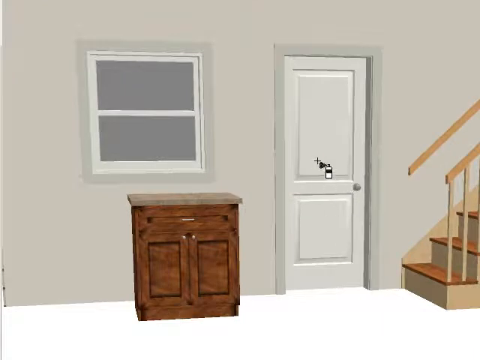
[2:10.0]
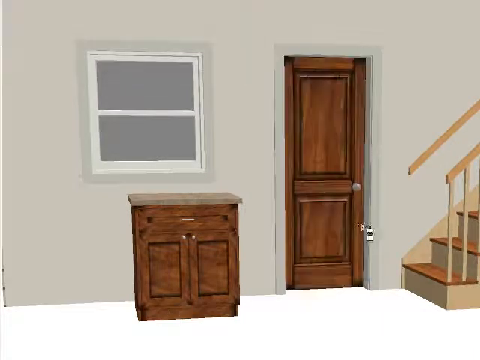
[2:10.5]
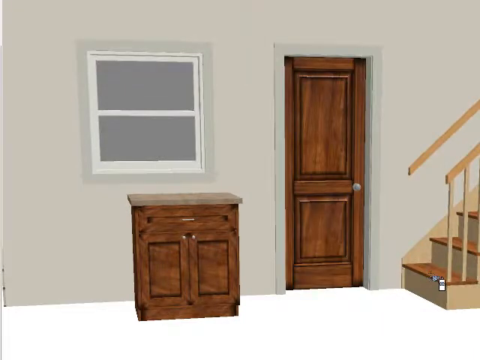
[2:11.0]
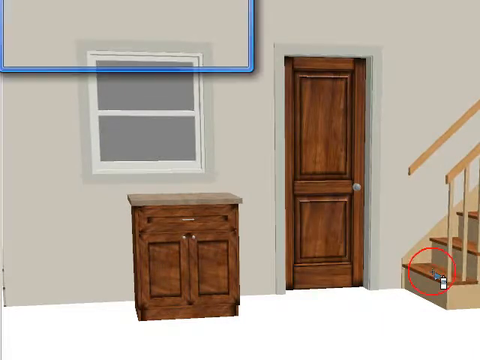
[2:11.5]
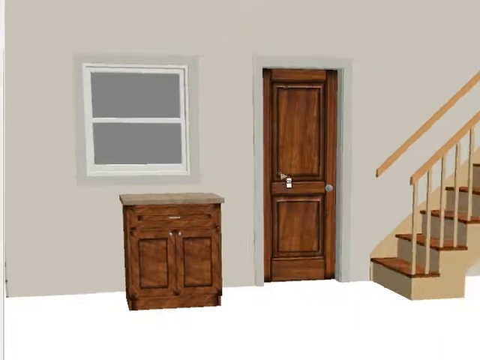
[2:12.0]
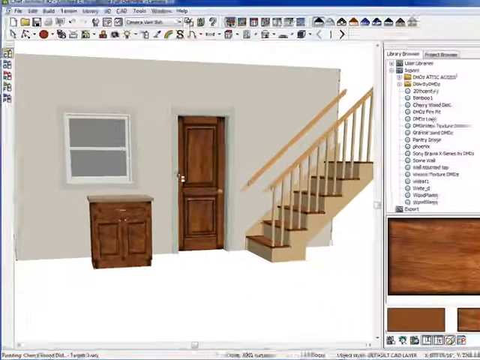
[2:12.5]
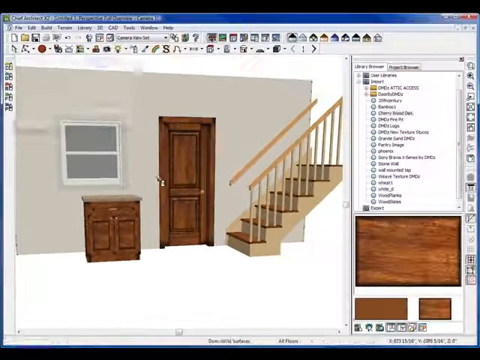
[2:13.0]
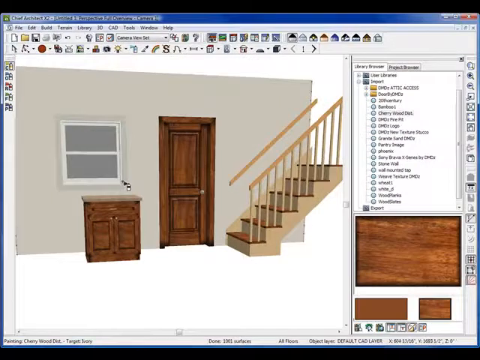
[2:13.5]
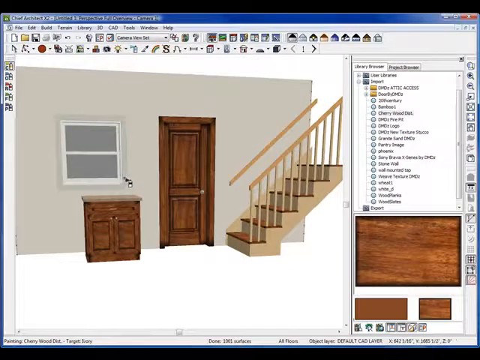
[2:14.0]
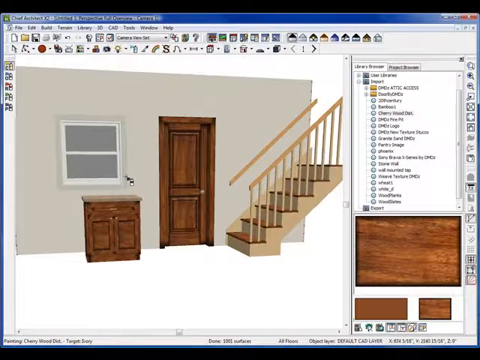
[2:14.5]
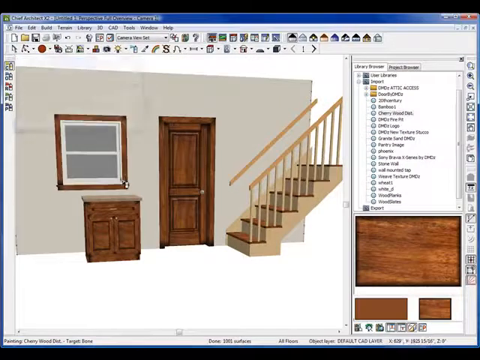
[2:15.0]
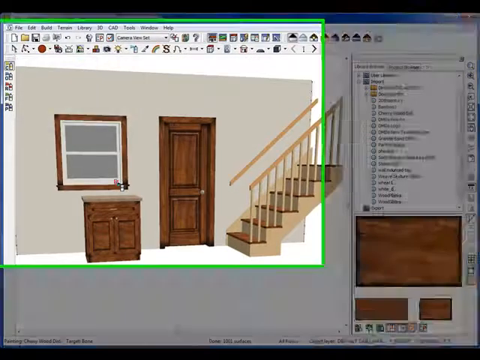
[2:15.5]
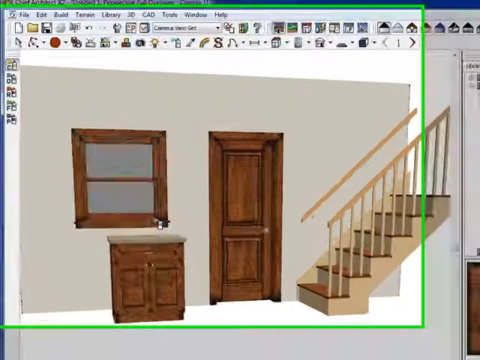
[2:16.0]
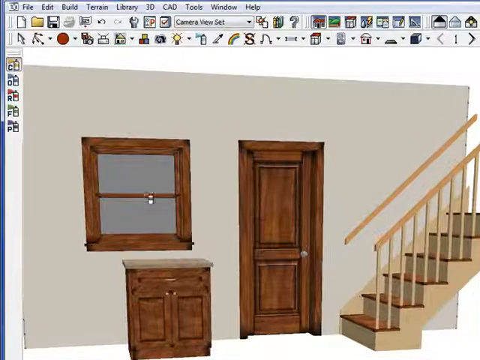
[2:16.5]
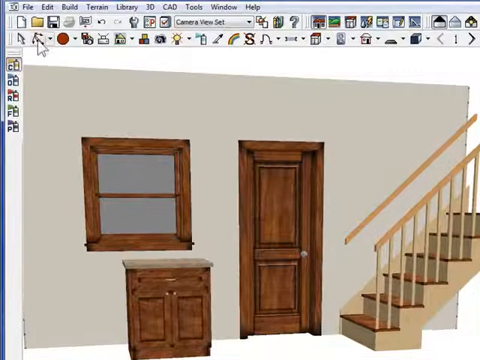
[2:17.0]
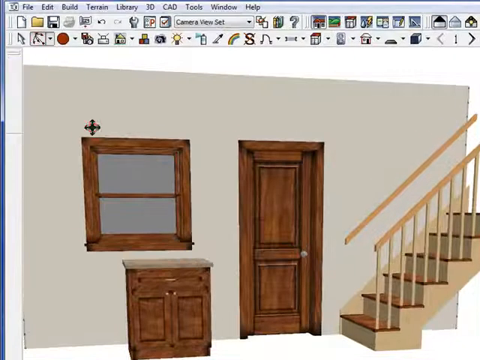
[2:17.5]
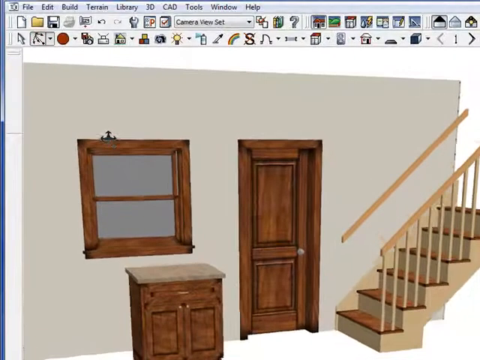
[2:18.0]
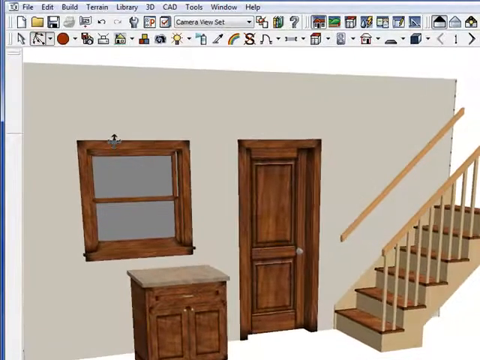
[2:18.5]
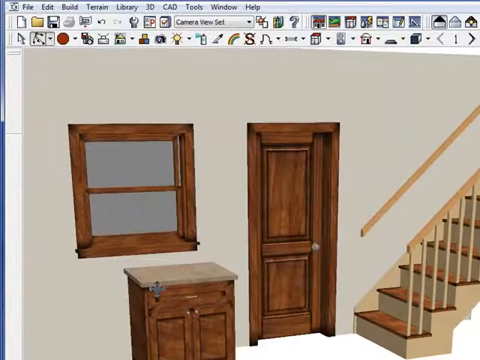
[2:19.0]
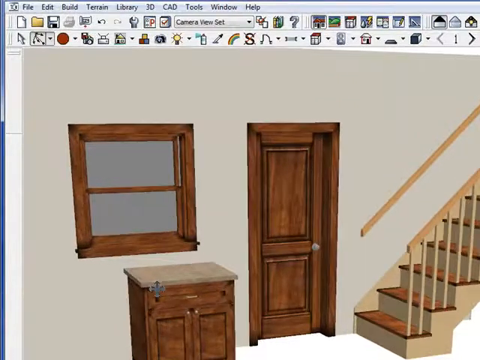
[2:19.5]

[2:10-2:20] The door is clicked and given the same look, as is the window frame. The tops of the stair steps are clicked and take on the wood look, and the wood frame of the window gets the wood look as well. What was previously a light tan nondescript color, and a lighter gray on the door, has become a warmer medium honey wood finish with visible grain.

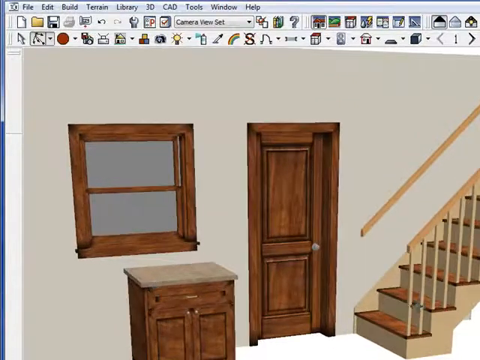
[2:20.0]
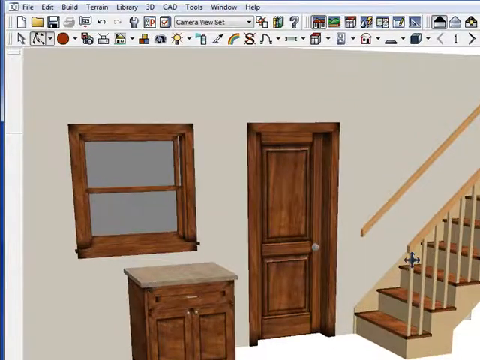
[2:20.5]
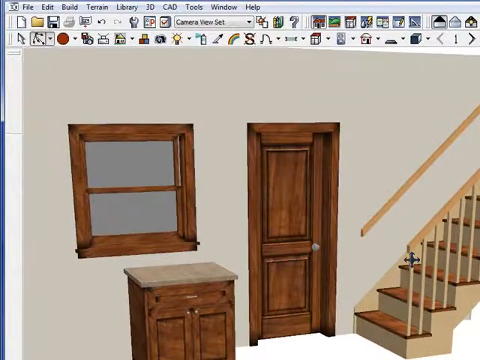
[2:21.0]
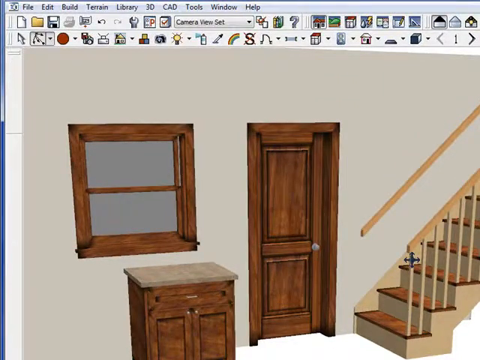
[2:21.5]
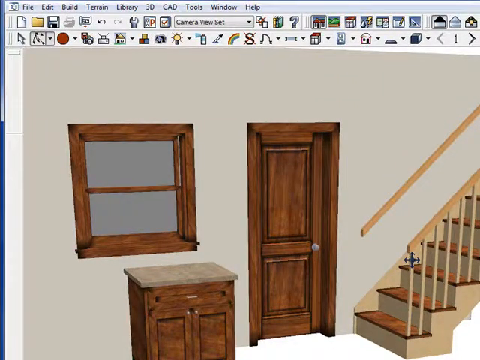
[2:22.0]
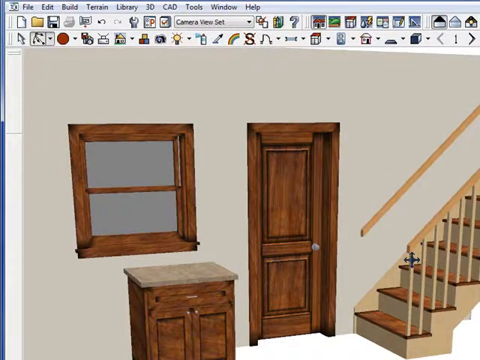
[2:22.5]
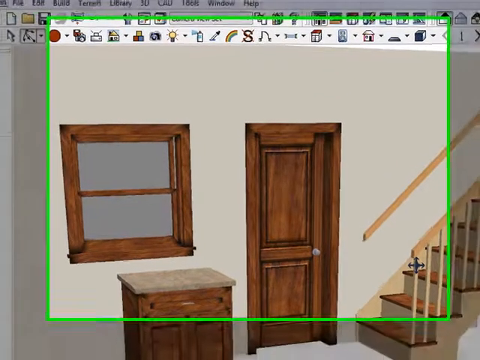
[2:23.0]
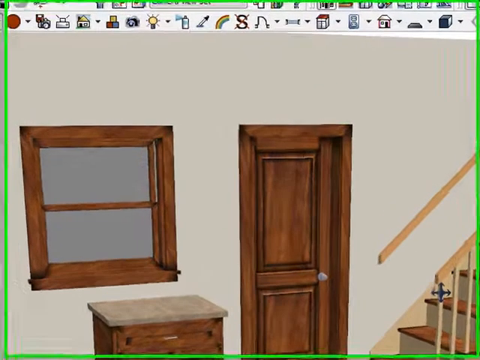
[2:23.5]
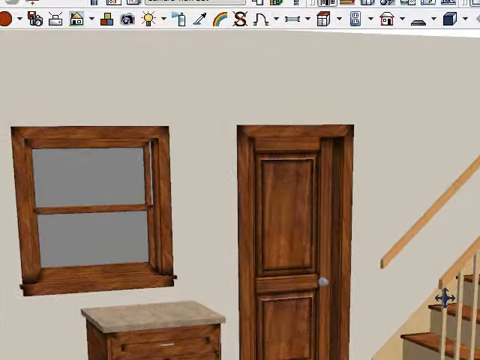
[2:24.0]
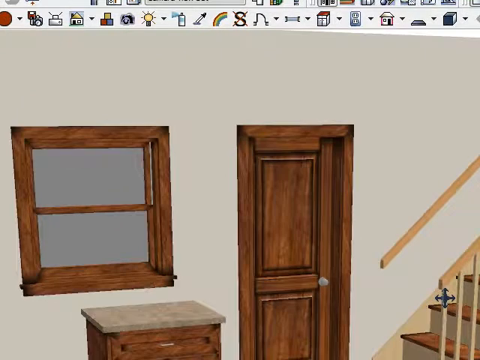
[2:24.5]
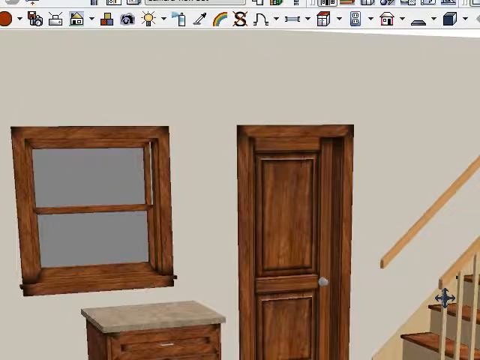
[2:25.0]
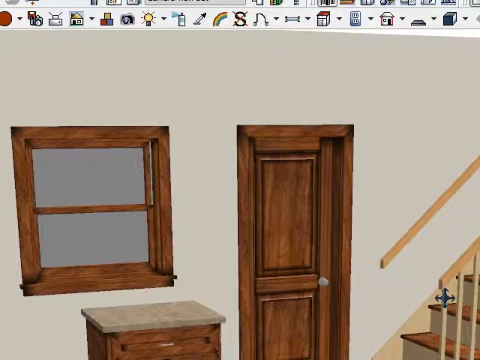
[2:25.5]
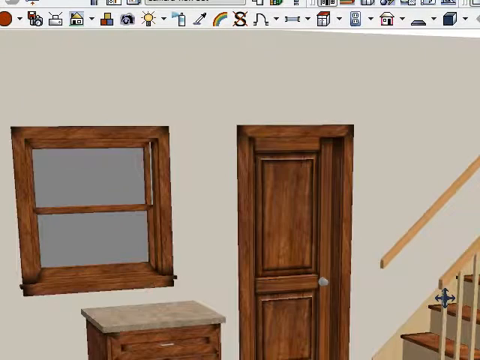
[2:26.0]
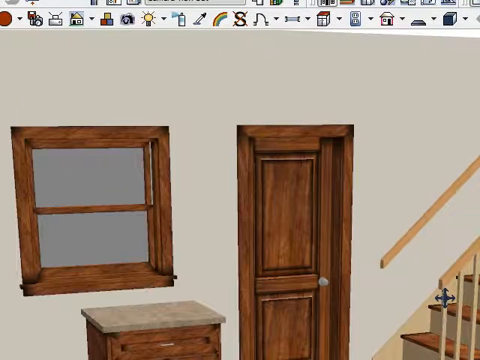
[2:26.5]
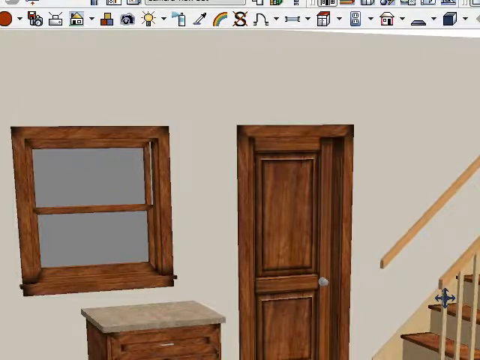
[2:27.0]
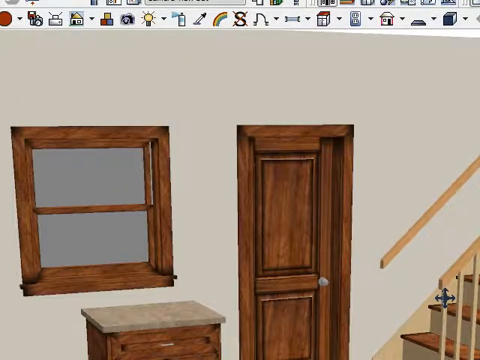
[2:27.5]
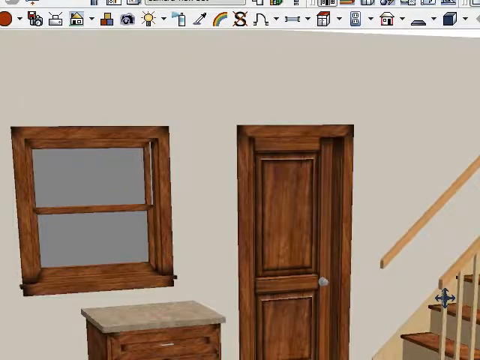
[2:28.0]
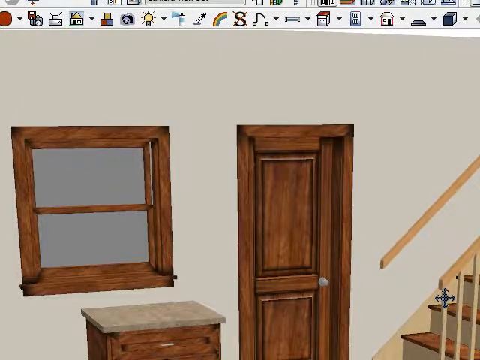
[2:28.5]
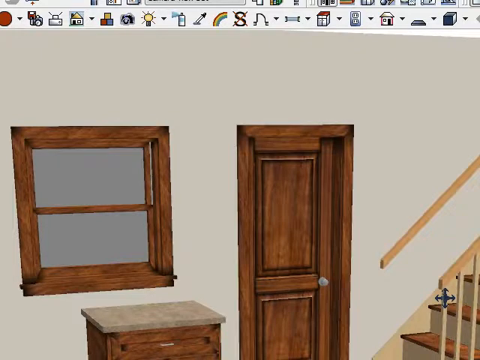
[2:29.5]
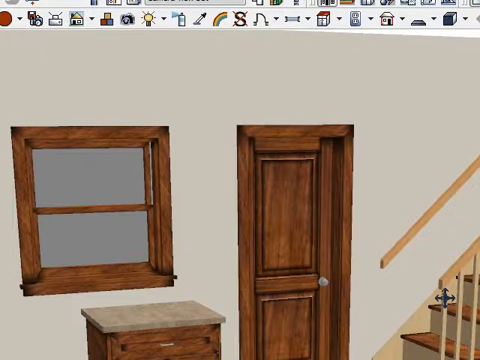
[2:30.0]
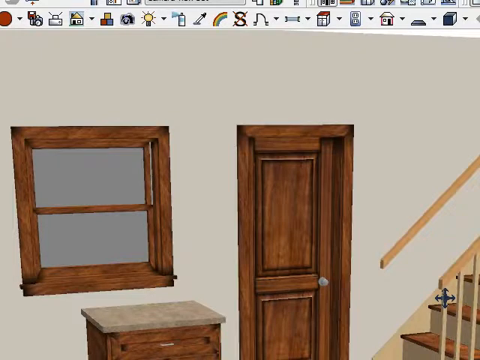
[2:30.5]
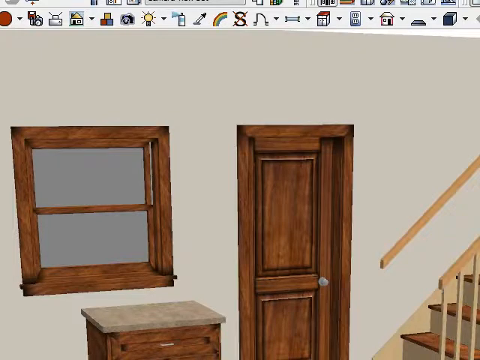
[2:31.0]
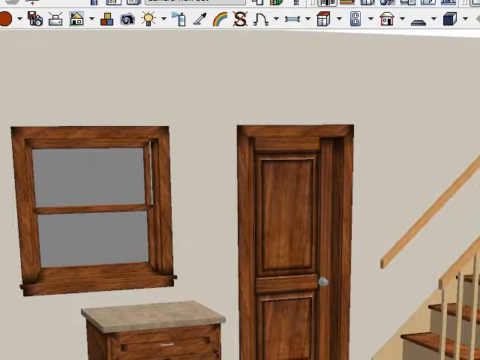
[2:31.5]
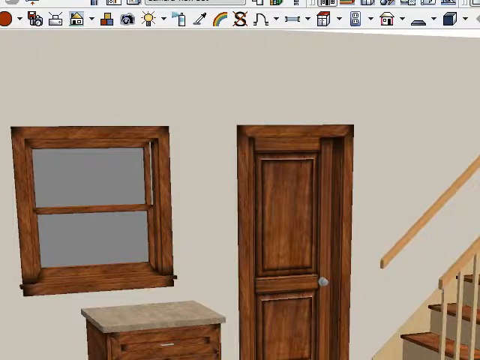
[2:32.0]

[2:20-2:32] The finished result shows everything with the wood applied; the stairs are tan except for the top of each step, which has the wood look. A bright green highlighted box is drawn, shadowing everything else in the background, covering the top of the cabinet, the top two-thirds of the door, and the window. The view then zooms in on that area, showing the upper part of the door and the window, with a little of the stairs visible on the right-hand side.